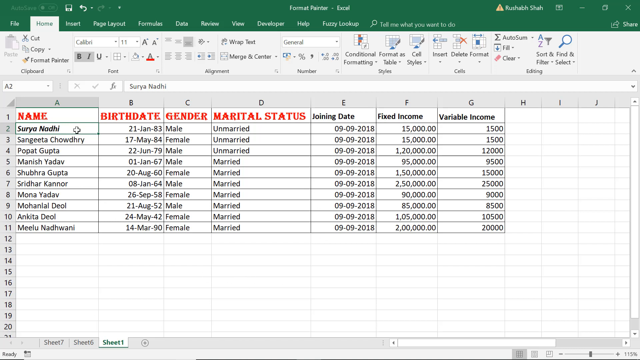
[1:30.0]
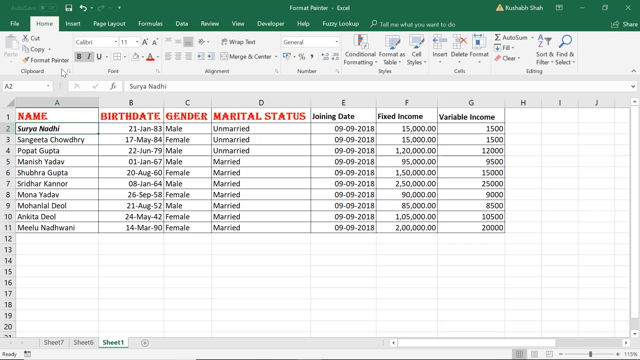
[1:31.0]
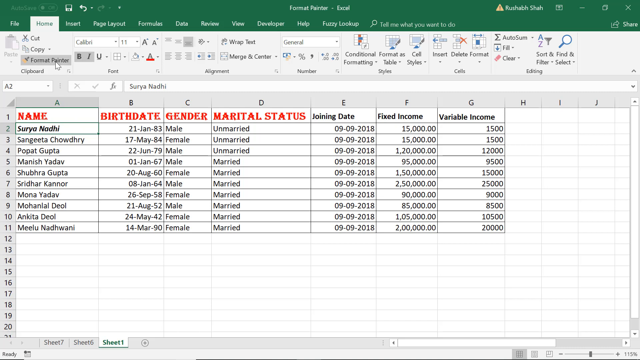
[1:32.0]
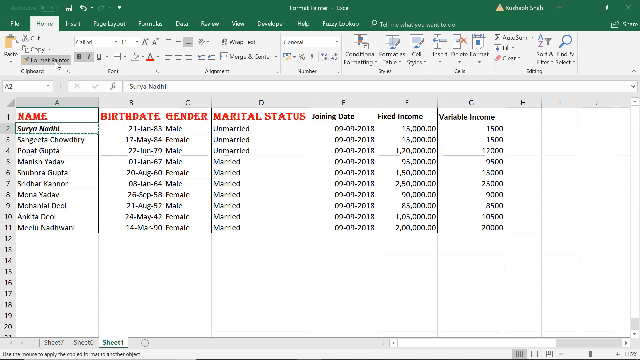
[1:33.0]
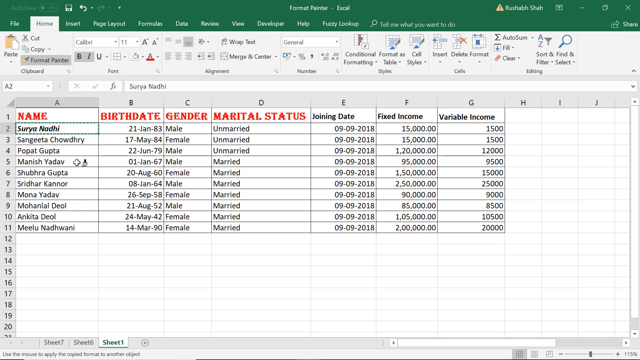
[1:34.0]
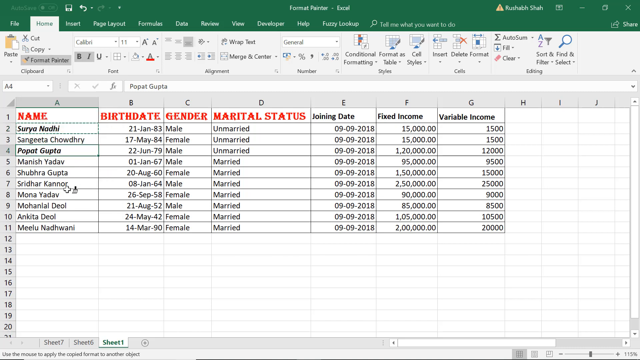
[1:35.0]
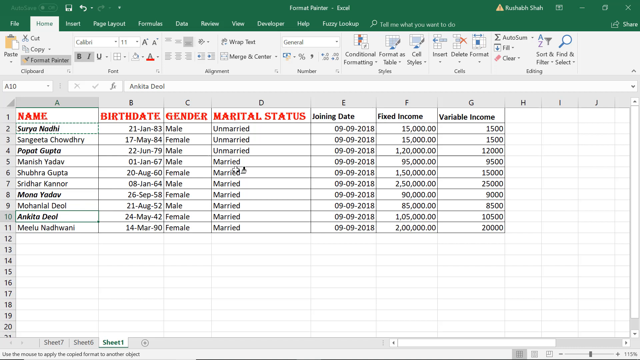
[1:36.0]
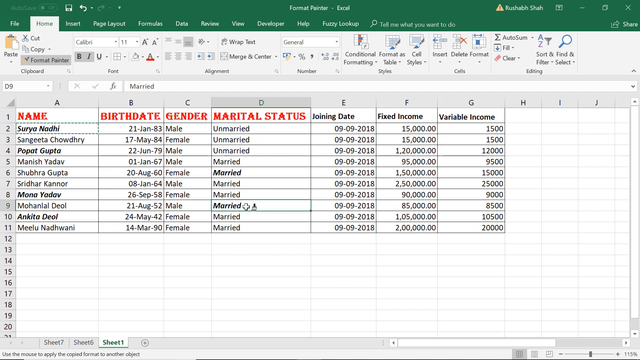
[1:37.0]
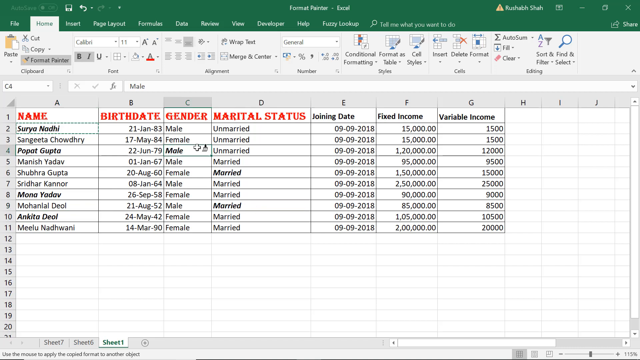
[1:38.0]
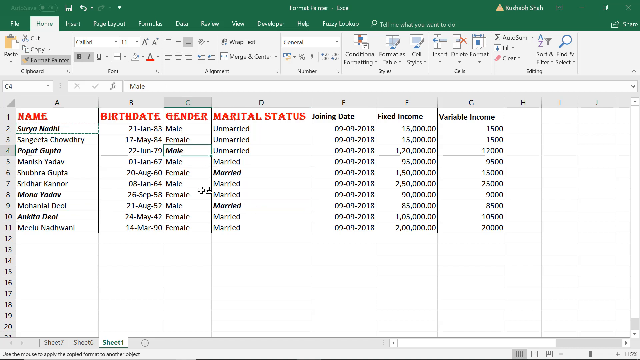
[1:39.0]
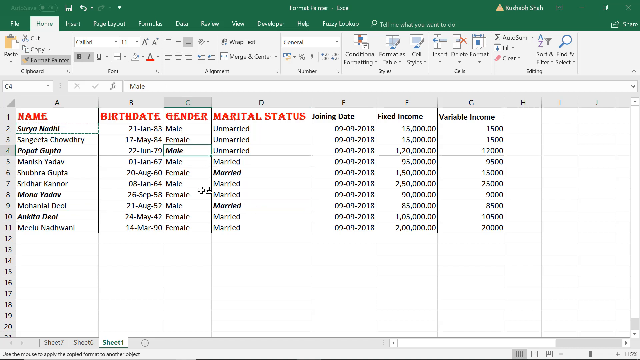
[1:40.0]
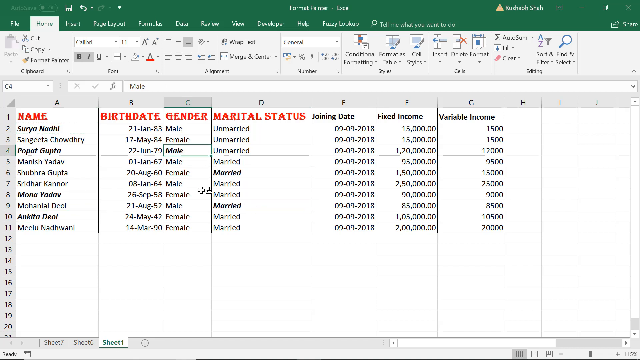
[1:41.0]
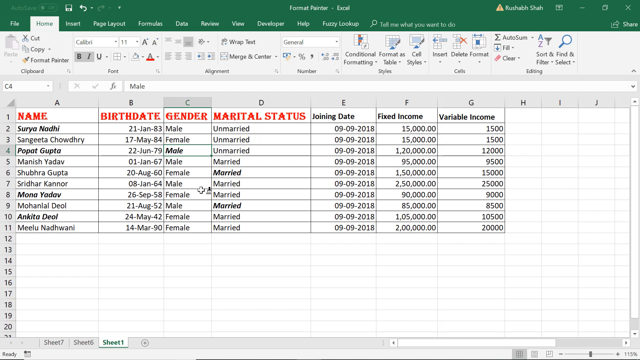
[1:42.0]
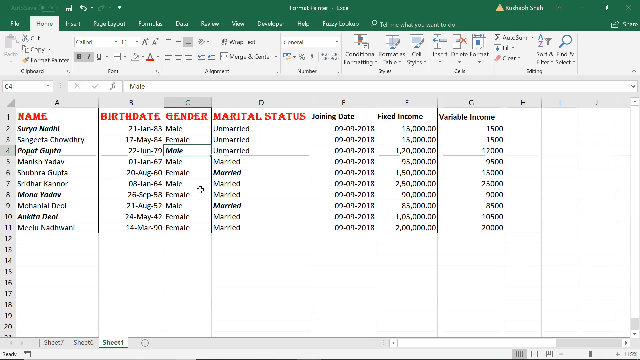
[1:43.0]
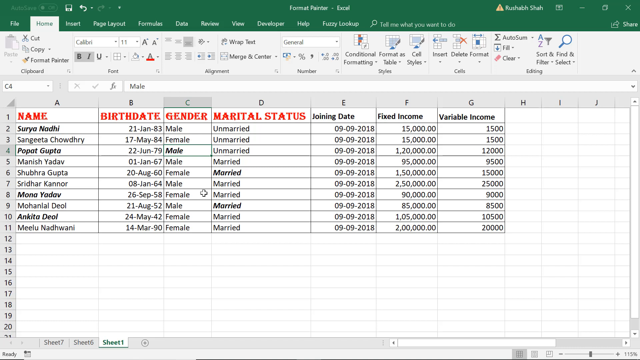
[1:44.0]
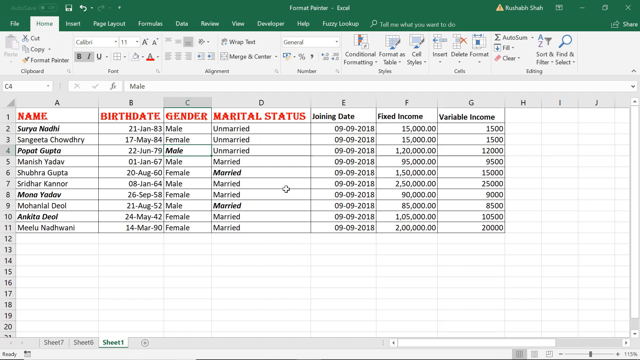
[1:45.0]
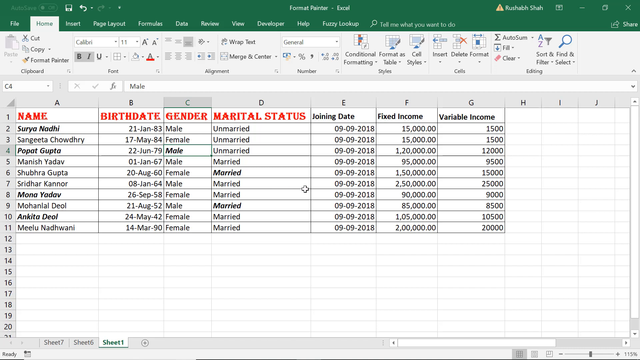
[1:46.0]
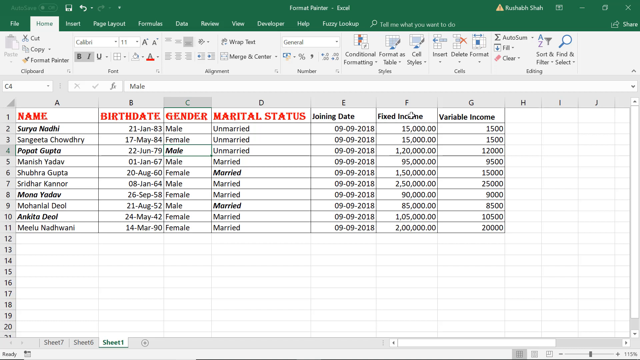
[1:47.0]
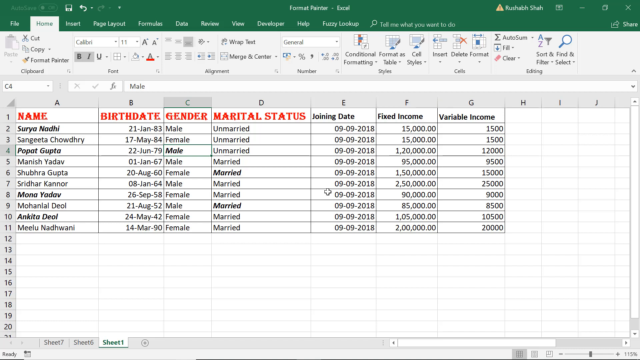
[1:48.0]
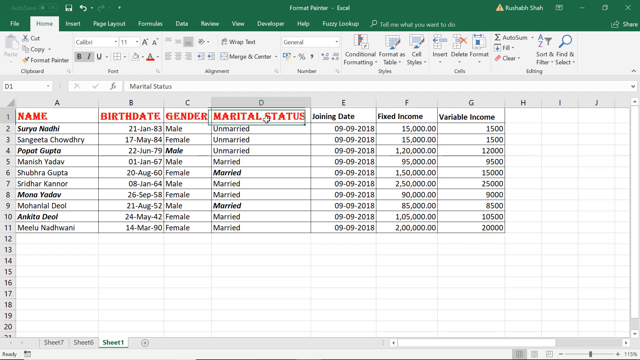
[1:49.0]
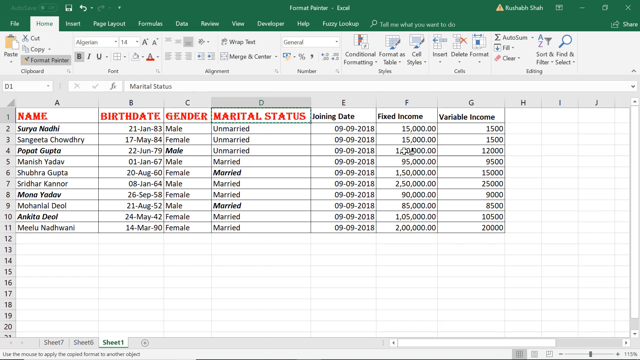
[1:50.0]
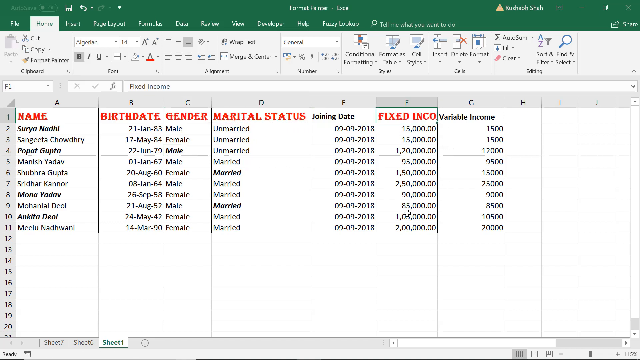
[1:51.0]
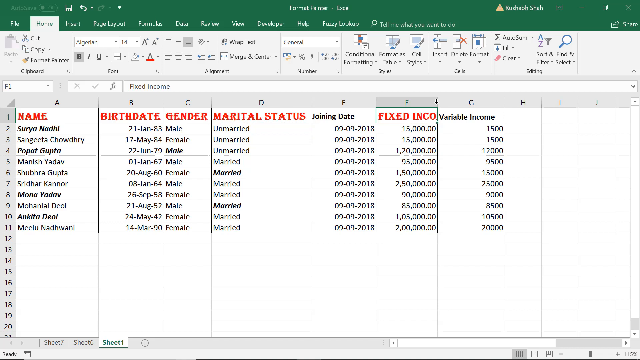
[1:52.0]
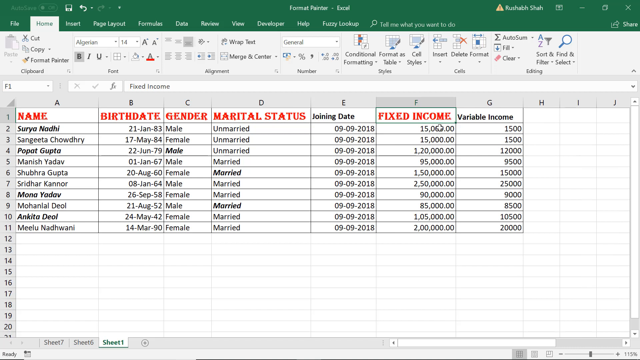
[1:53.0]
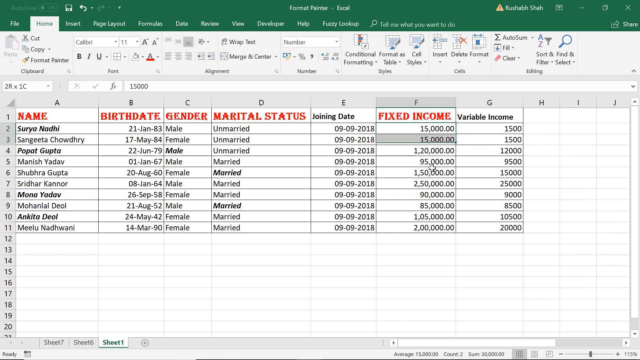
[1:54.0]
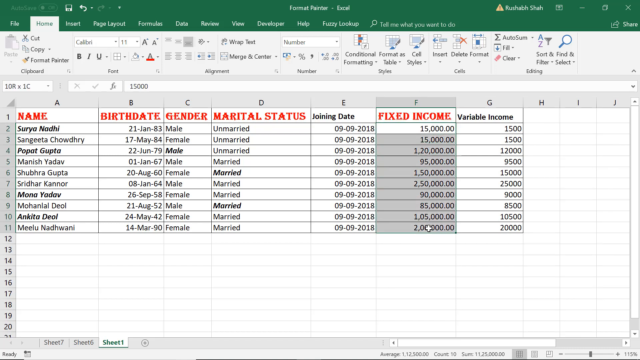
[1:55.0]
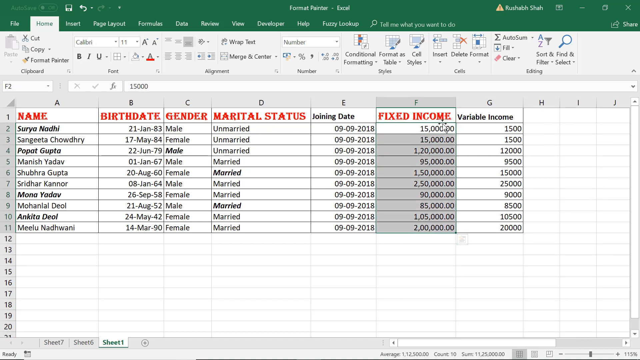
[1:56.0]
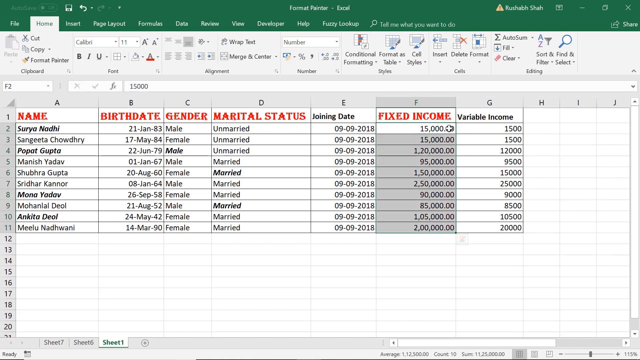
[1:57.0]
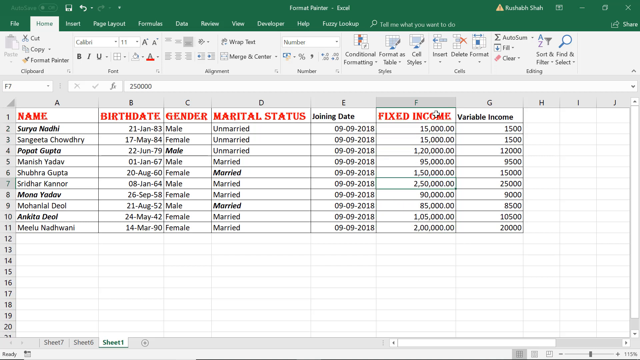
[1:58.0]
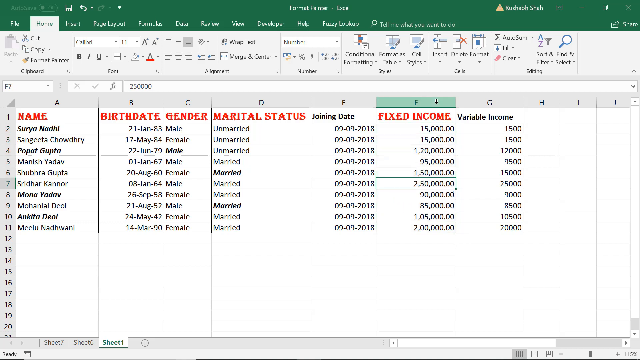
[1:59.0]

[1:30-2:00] Edits to the spreadsheet continue, with the user using the Format Painter tool to change the font and color of the header text on certain columns. The user appears to be going around randomly, with no particular pattern, picking some cells within the rows and changing their text to bold and italics, before going back to the Format Painter tool and changing the font in the fixed income item. The user seems to be bouncing around, changing different words and information to a bold font.